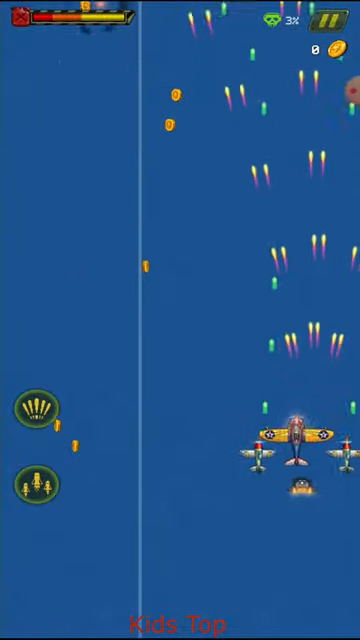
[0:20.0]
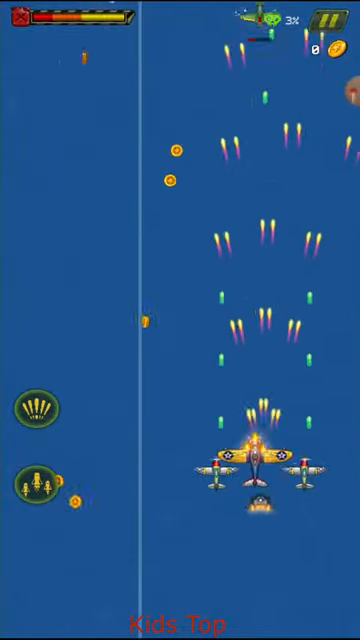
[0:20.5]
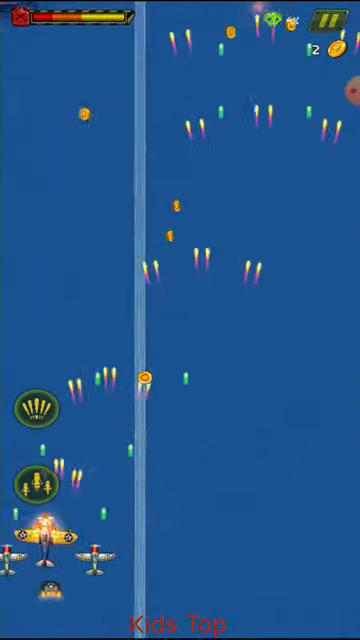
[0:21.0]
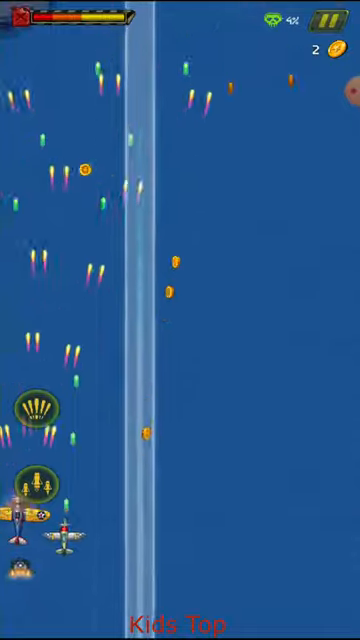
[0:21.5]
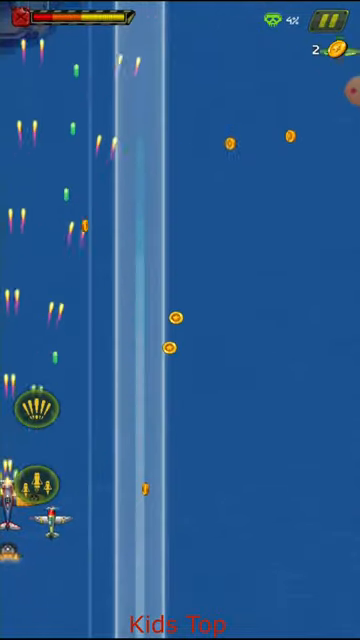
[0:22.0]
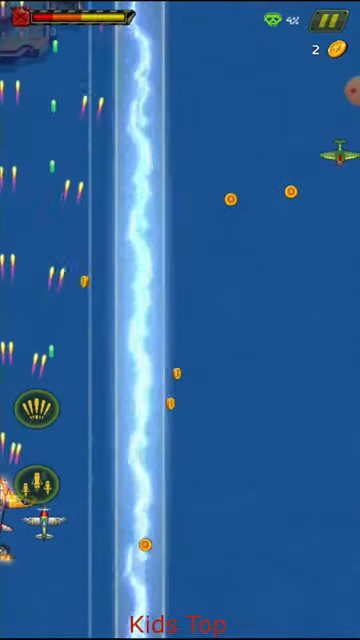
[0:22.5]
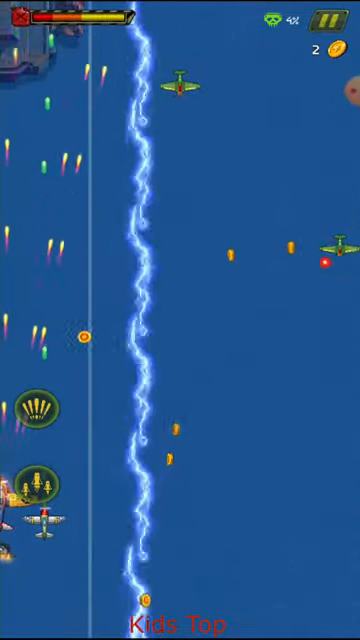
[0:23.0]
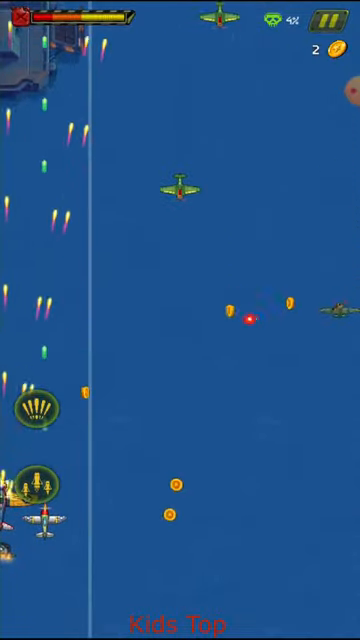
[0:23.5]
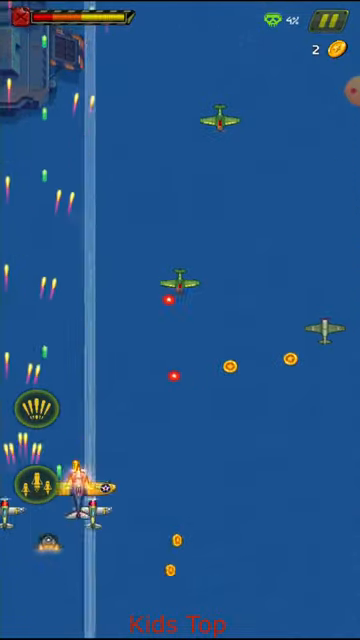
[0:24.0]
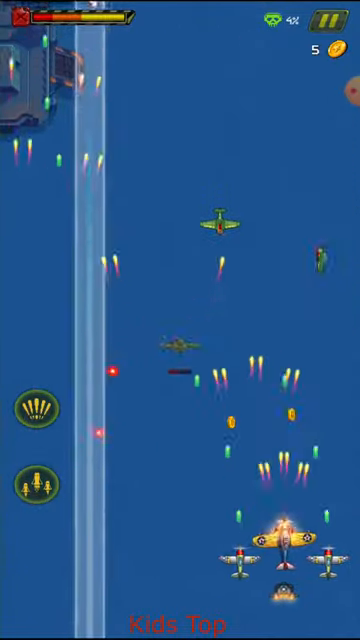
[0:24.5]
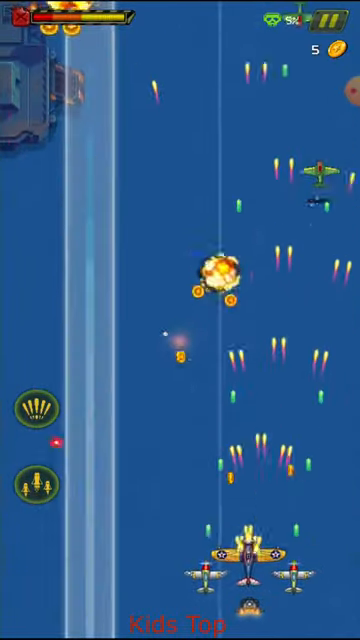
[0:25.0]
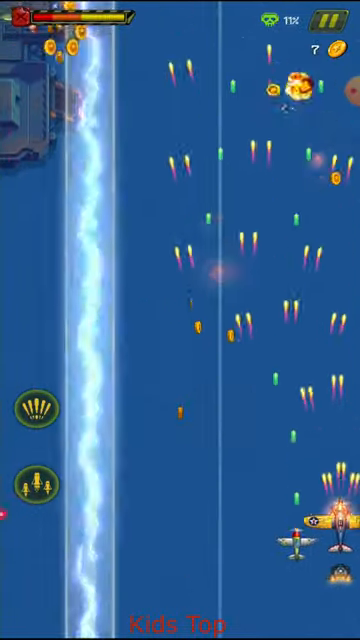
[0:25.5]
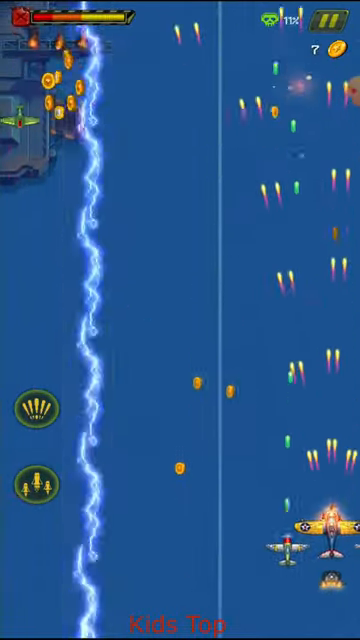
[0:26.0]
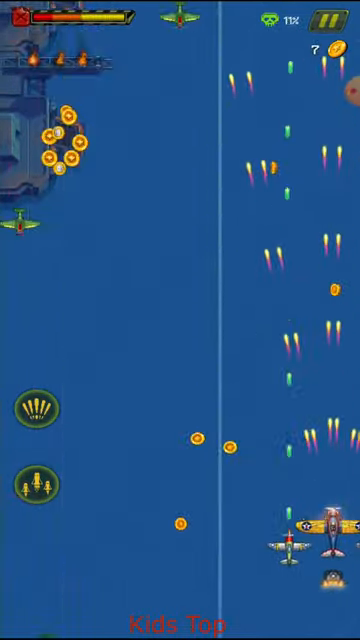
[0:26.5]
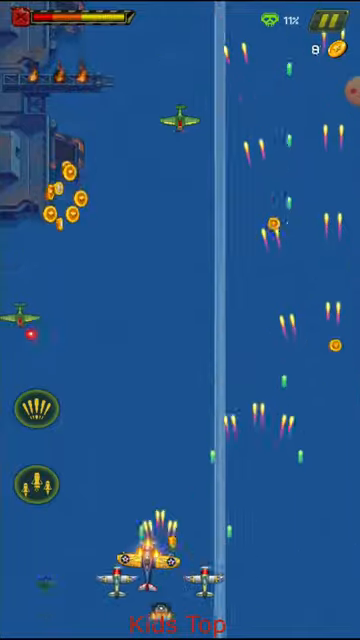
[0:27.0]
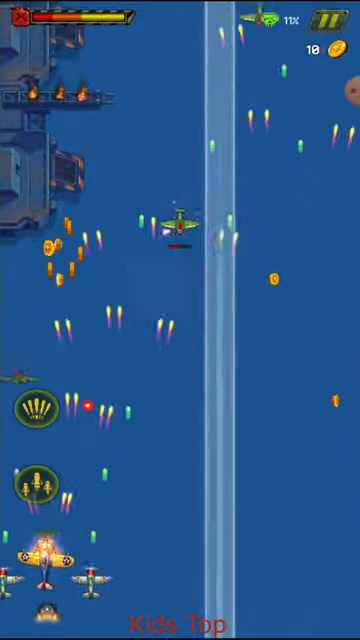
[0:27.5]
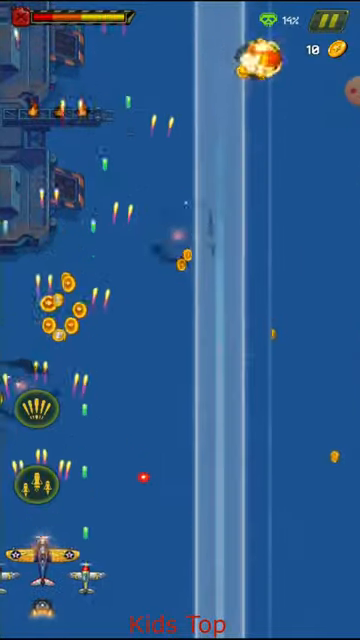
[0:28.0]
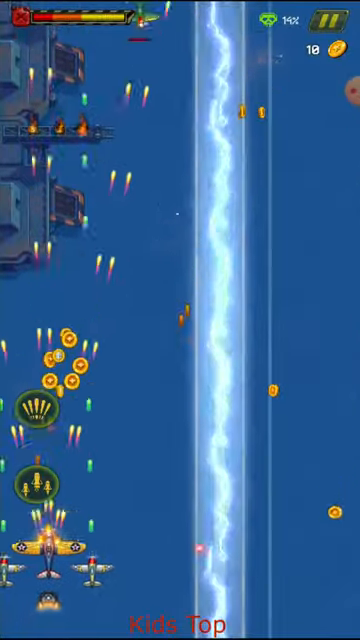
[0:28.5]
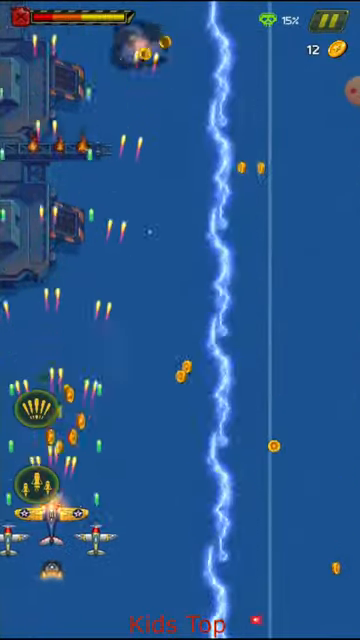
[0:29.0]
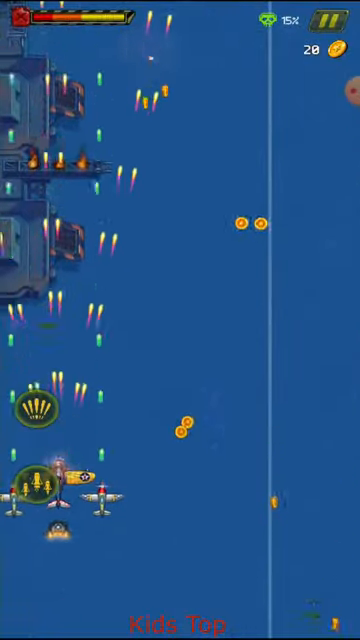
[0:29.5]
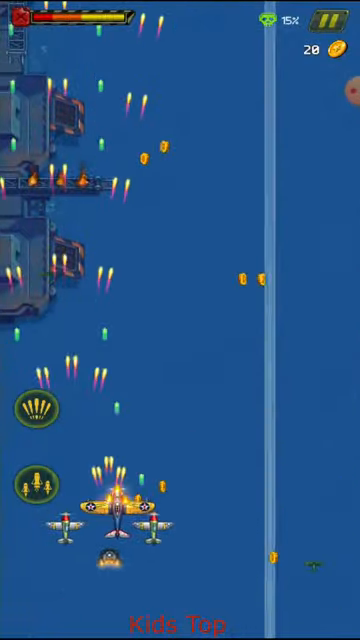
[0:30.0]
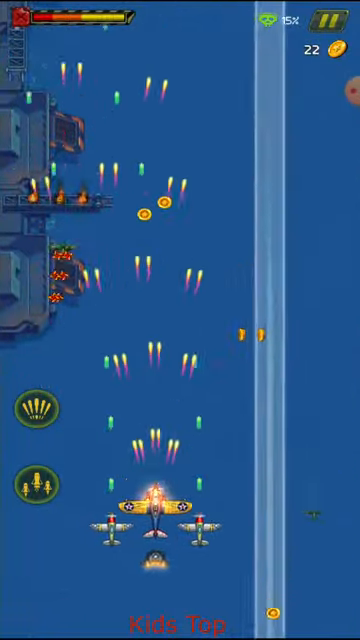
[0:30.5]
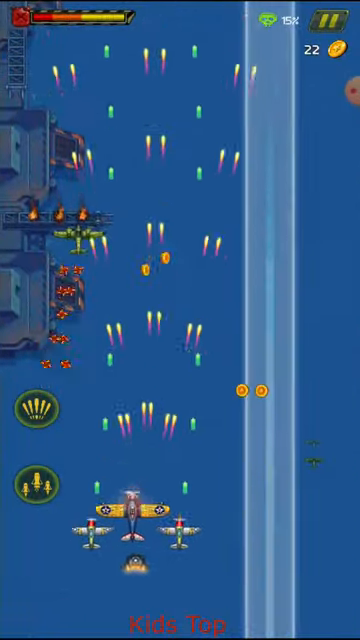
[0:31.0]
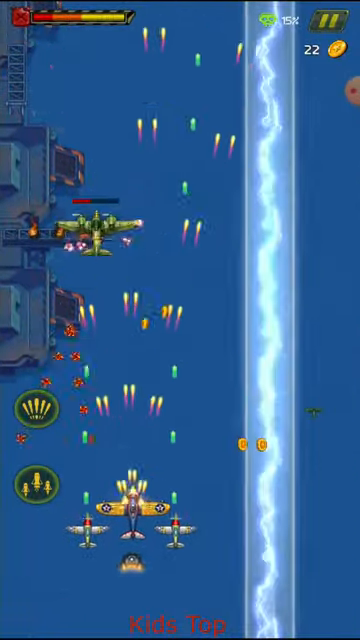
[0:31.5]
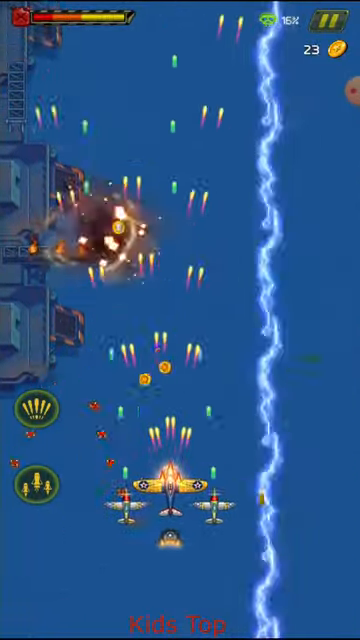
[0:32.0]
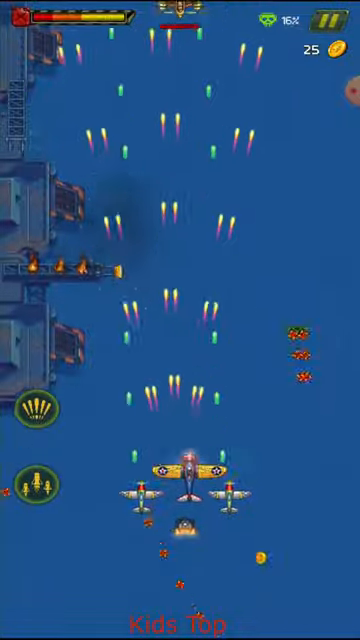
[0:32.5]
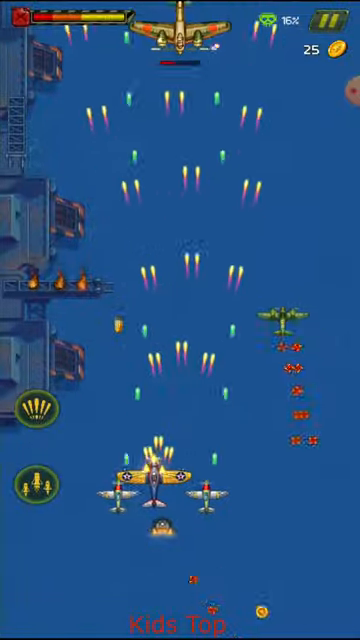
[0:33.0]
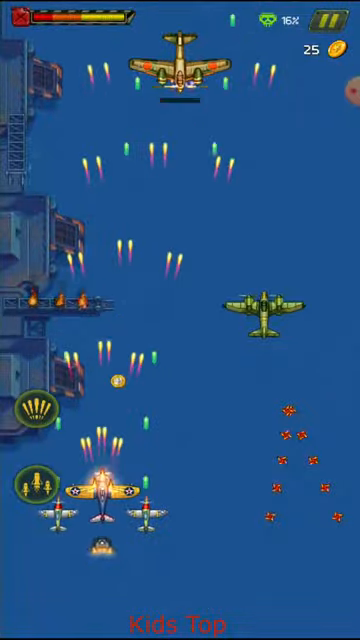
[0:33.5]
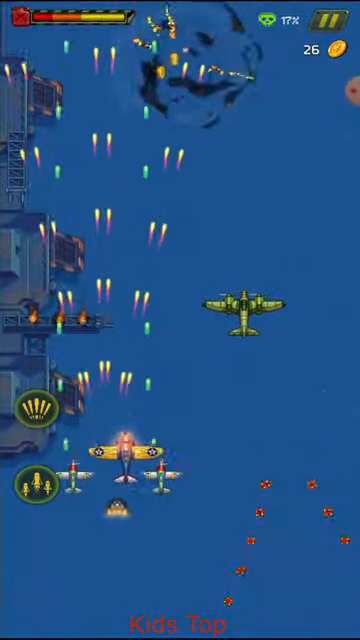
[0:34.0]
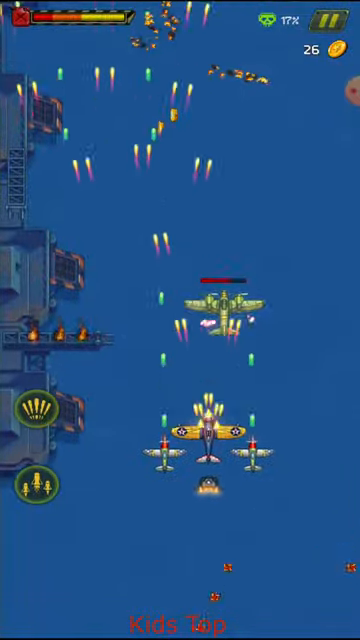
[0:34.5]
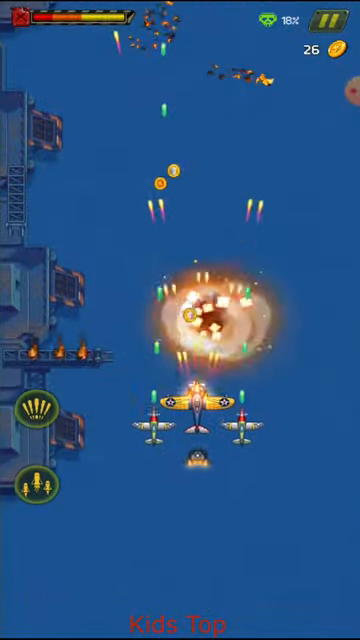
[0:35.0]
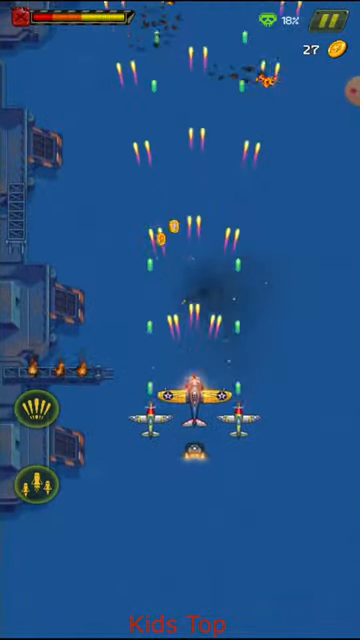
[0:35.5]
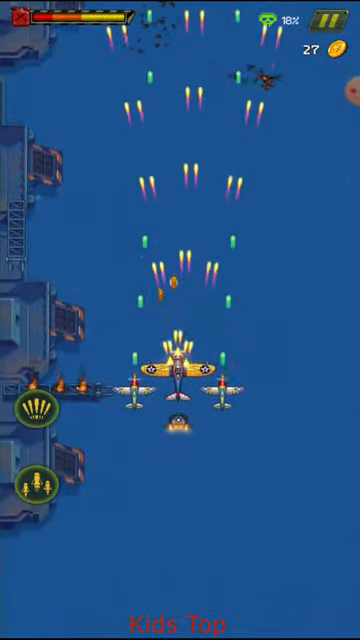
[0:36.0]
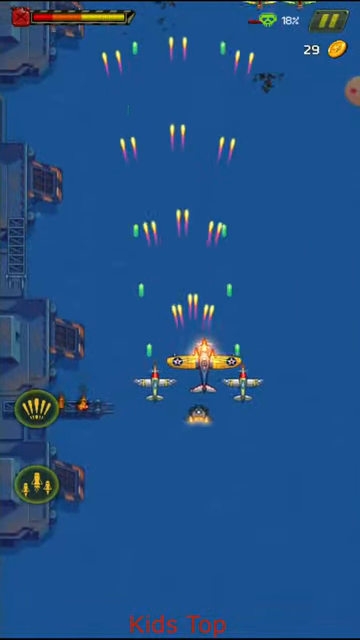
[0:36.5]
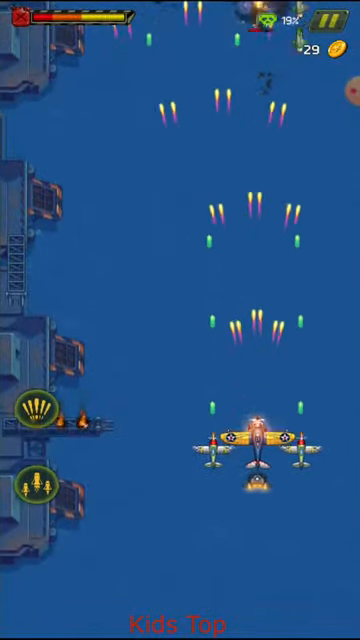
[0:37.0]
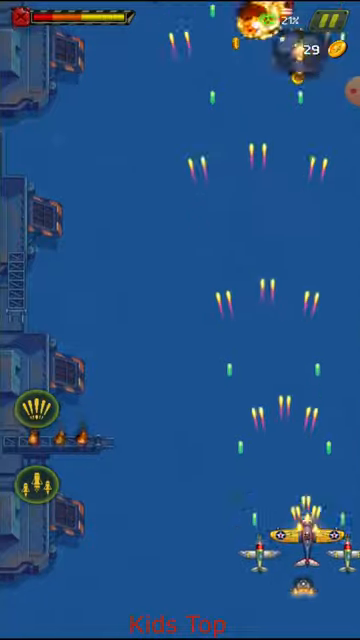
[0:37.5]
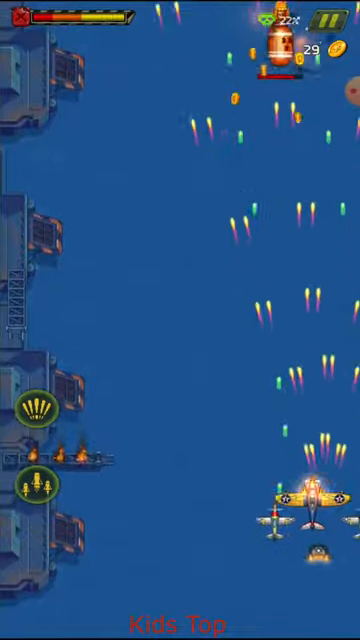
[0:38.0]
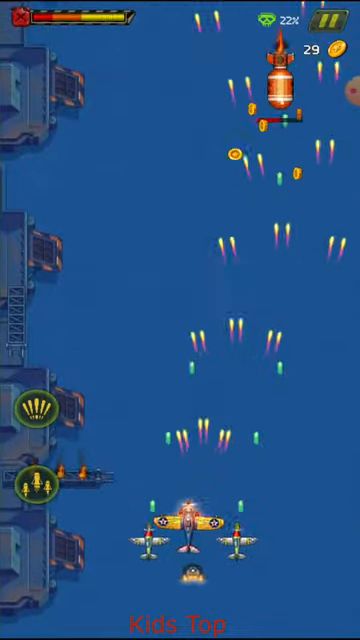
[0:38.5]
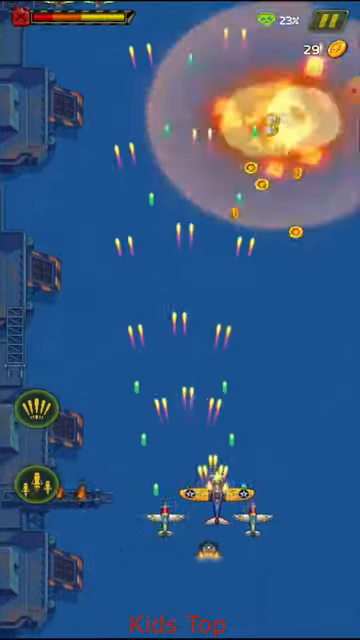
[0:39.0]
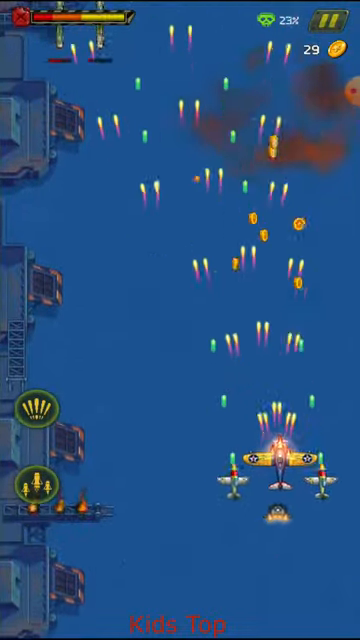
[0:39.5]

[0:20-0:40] In a shooter game, the player flies some kind of military jet with two other jets to its left and right and some kind of object behind it, against a blue screen, shooting bullets in all directions. Somewhat like a bullet time game, the player moves back and forth trying to avoid lots of bullets, lightning bolts and other things flying at them, while trying to destroy planes that come at them. At one point a very large plane shows up and is destroyed; another large plane shows up and is destroyed too. The player collects objects that look like gold coins, running into them on purpose, while avoiding lightning bolts, planes shooting bullets, and different kinds of fireballs shooting from the top of the screen. The screen keeps moving up and forward no matter what happens, so the player moves back and forth to avoid objects. A health bar is in the top left corner, and in the top right corner are stats on the objects the player has picked up. Controlling three fighter jets, the player shoots lots of bullets at the same time in many directions, moving forward and shooting the planes that come their way.